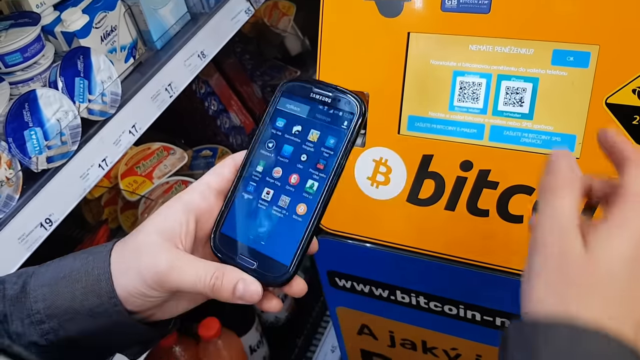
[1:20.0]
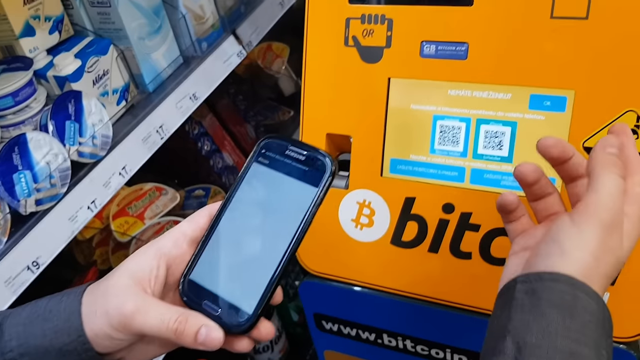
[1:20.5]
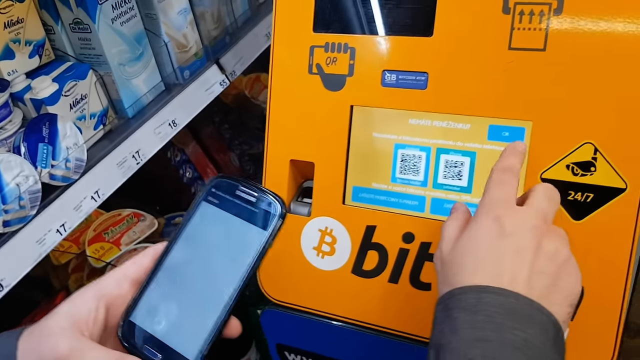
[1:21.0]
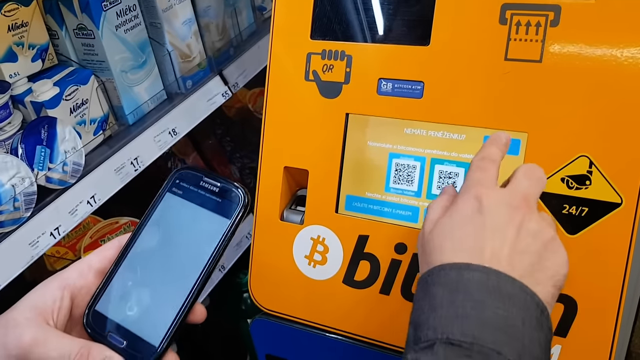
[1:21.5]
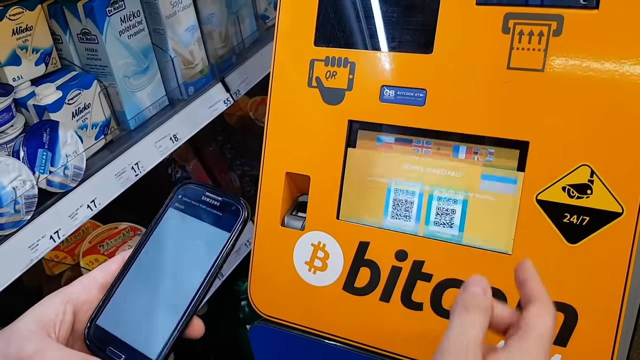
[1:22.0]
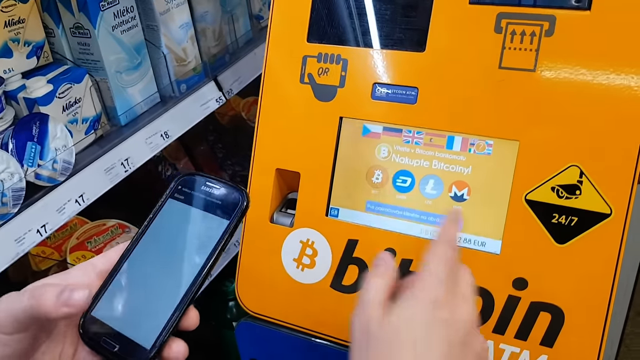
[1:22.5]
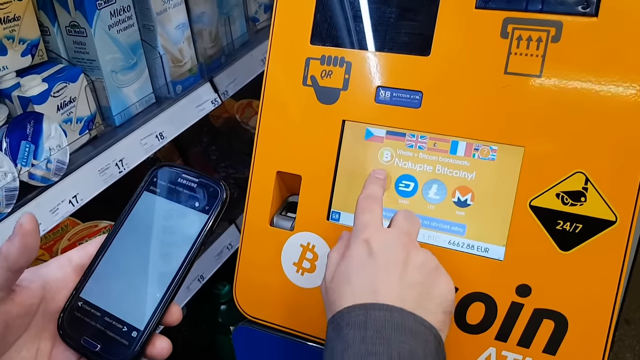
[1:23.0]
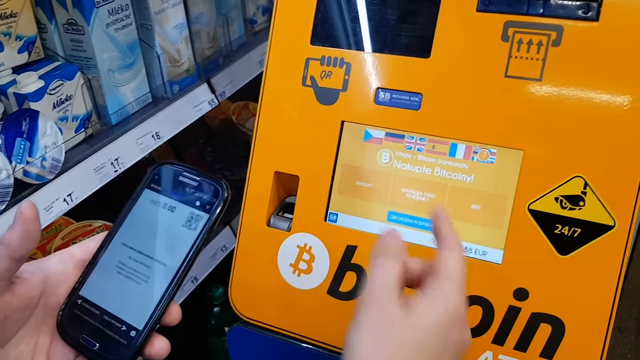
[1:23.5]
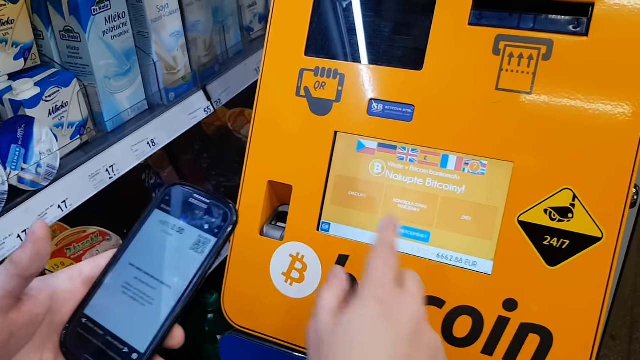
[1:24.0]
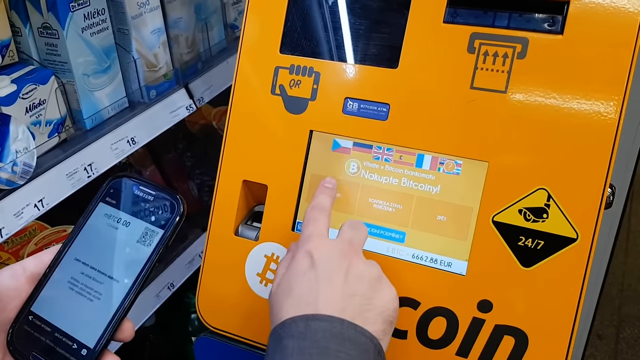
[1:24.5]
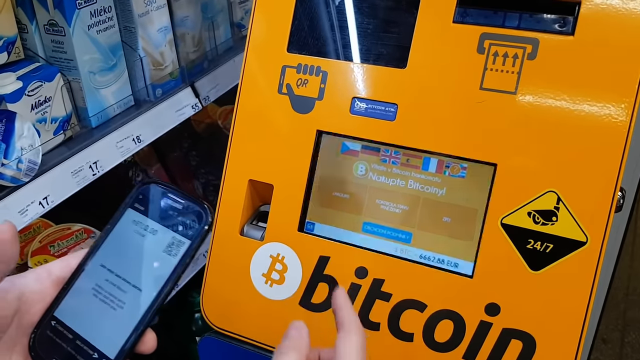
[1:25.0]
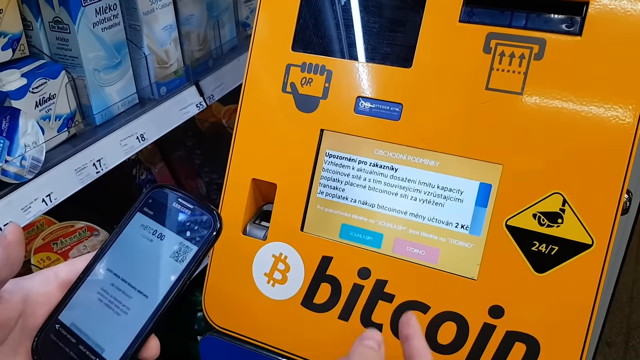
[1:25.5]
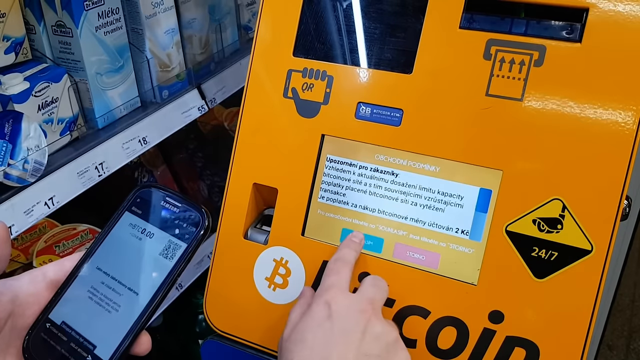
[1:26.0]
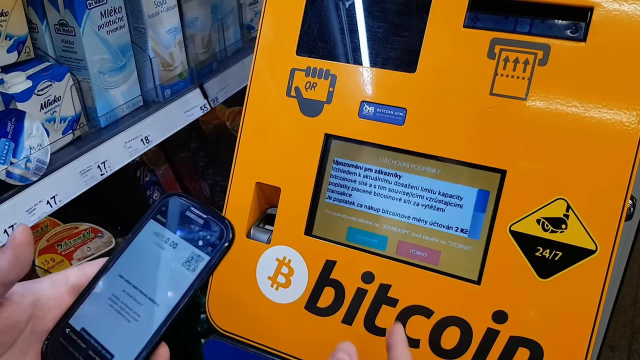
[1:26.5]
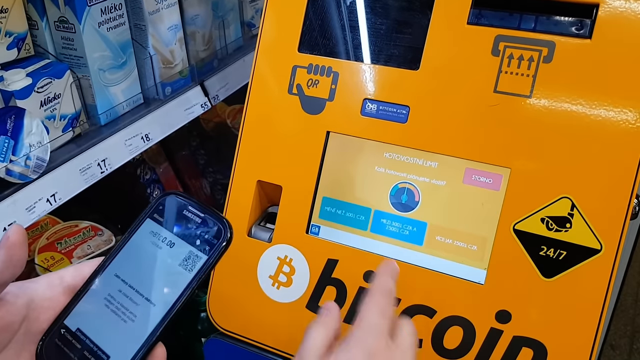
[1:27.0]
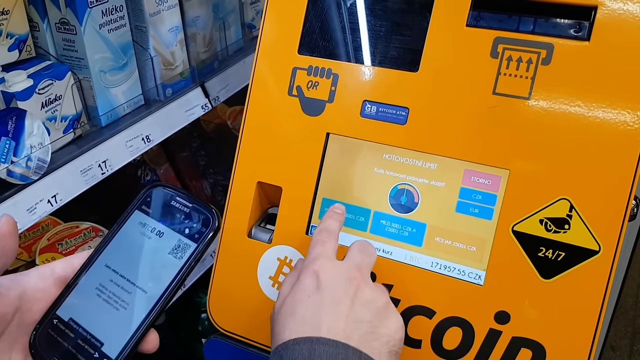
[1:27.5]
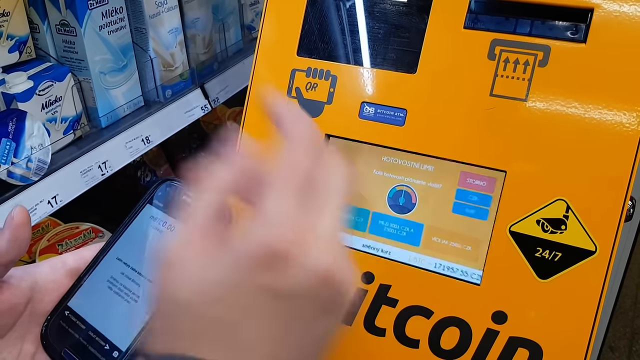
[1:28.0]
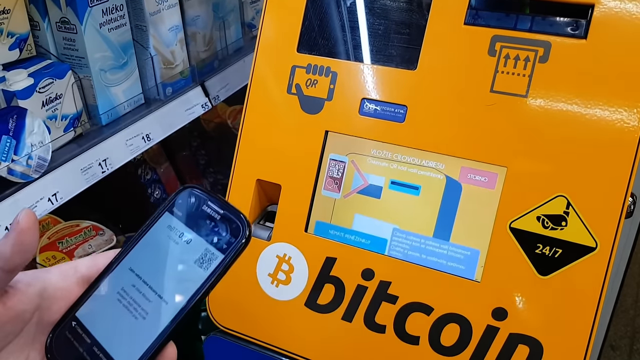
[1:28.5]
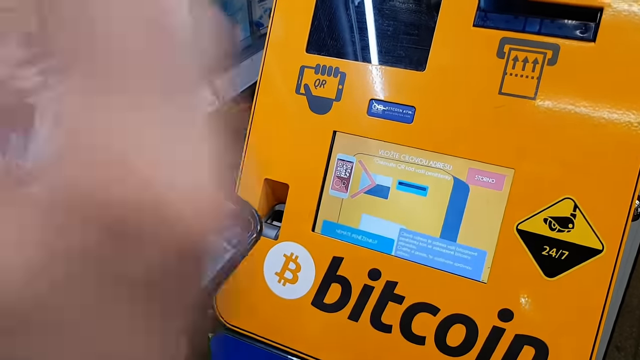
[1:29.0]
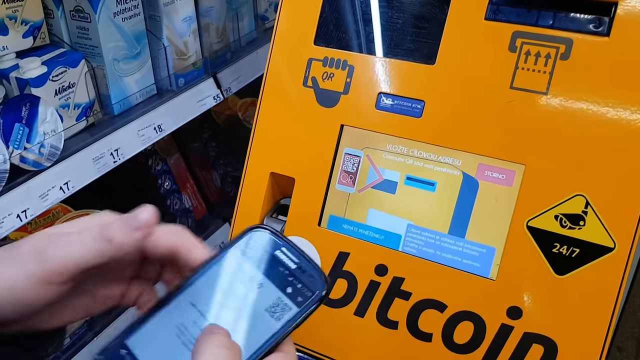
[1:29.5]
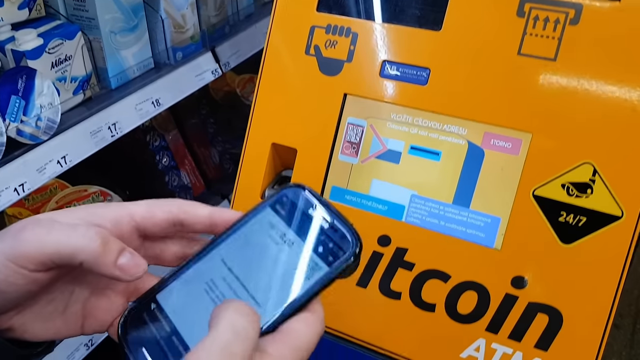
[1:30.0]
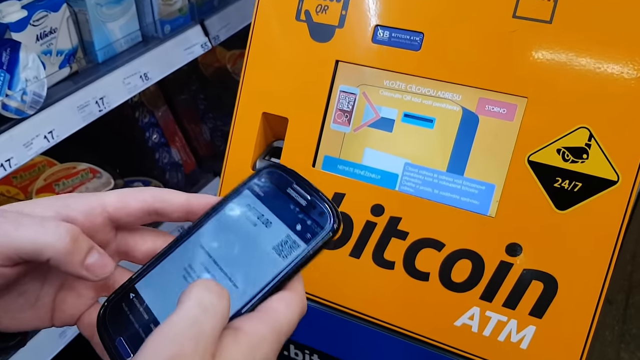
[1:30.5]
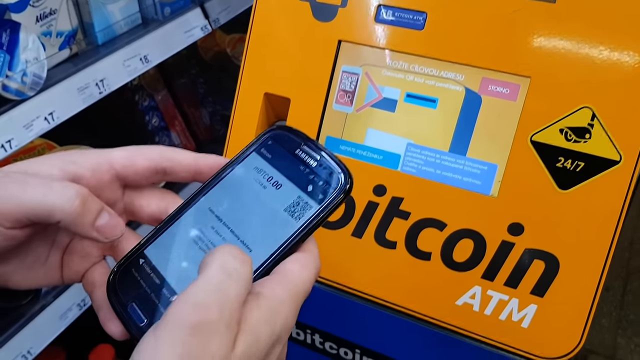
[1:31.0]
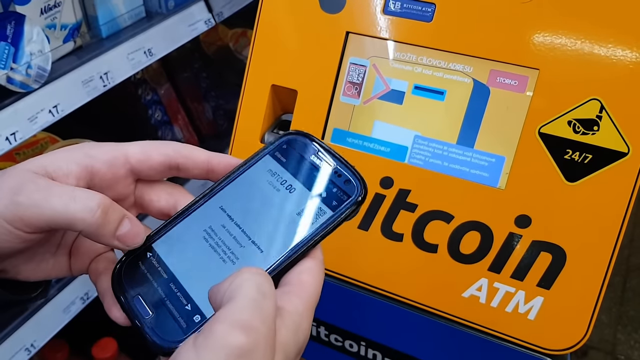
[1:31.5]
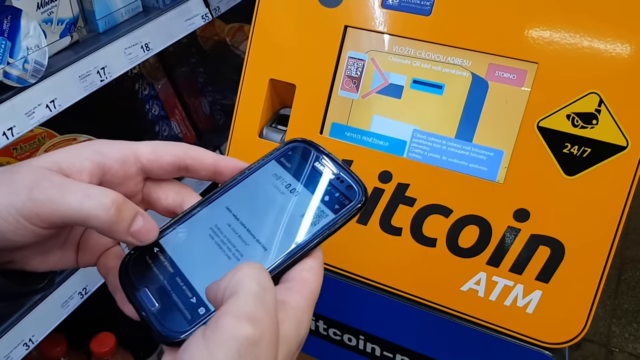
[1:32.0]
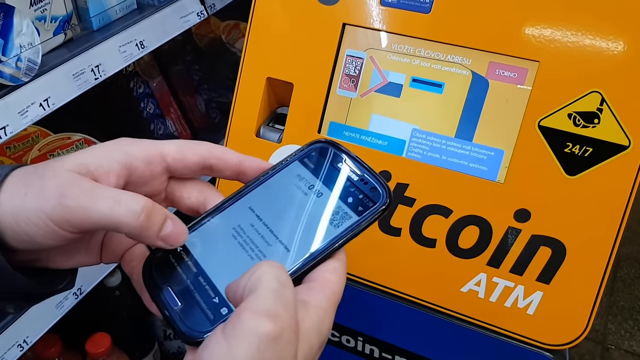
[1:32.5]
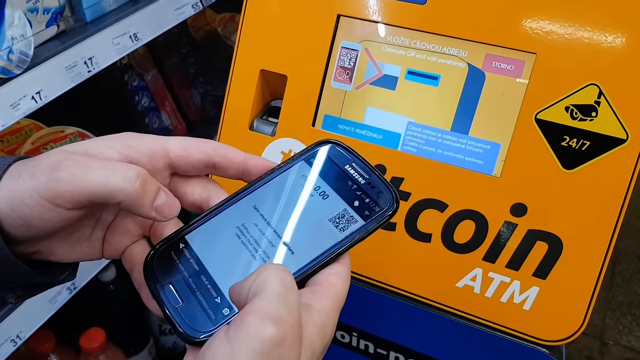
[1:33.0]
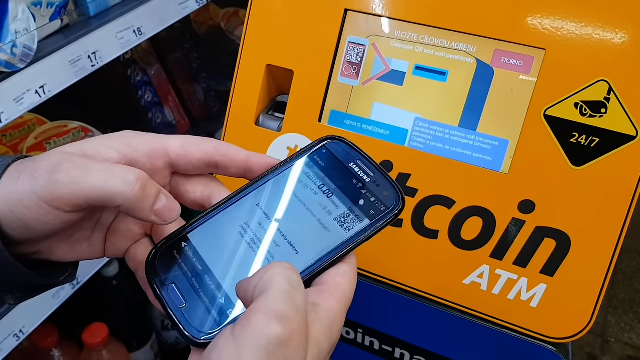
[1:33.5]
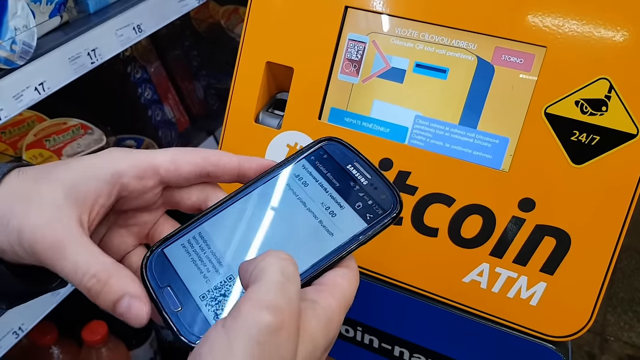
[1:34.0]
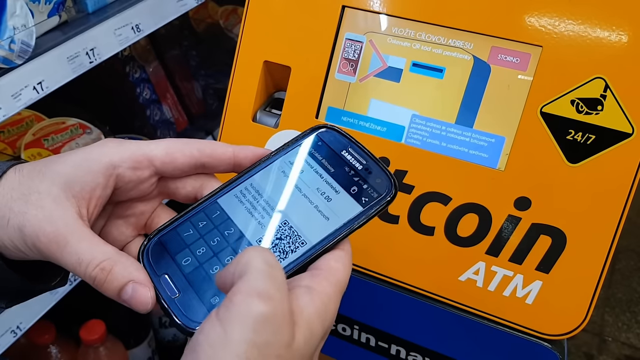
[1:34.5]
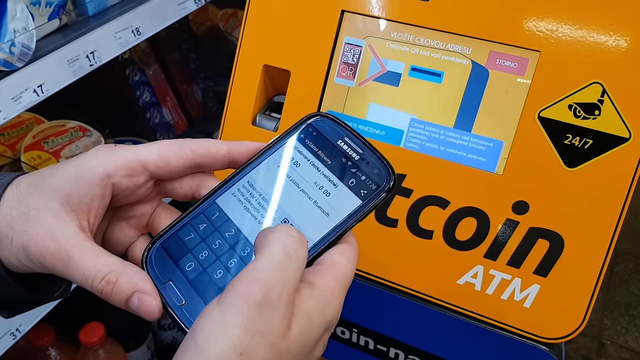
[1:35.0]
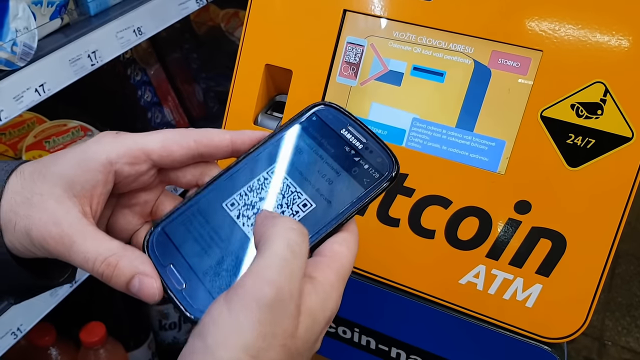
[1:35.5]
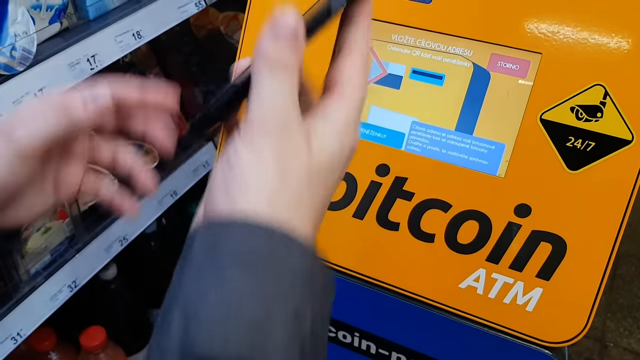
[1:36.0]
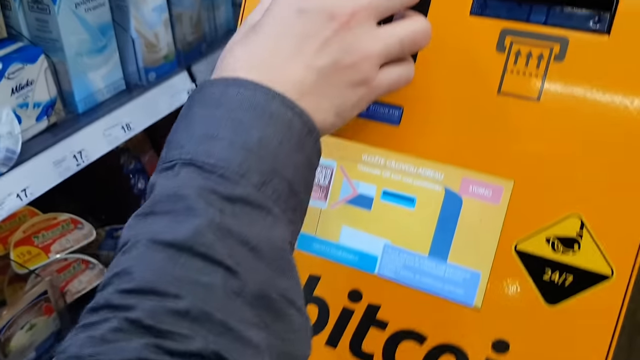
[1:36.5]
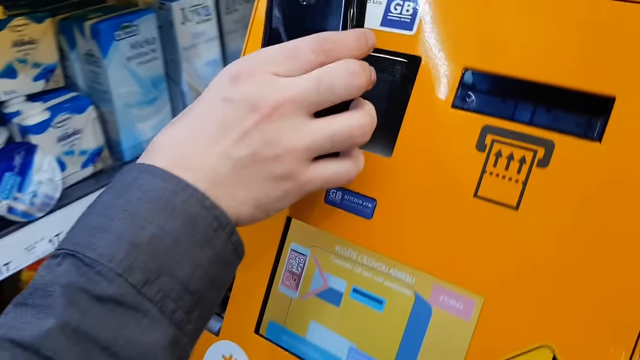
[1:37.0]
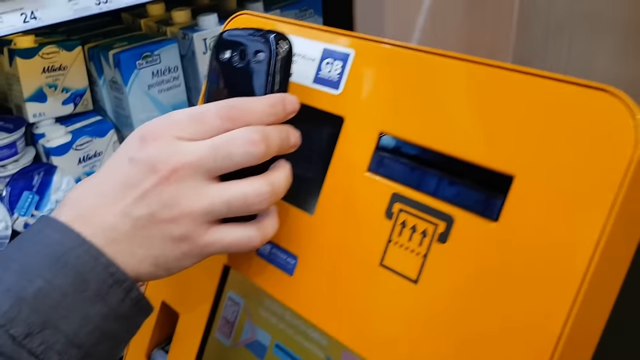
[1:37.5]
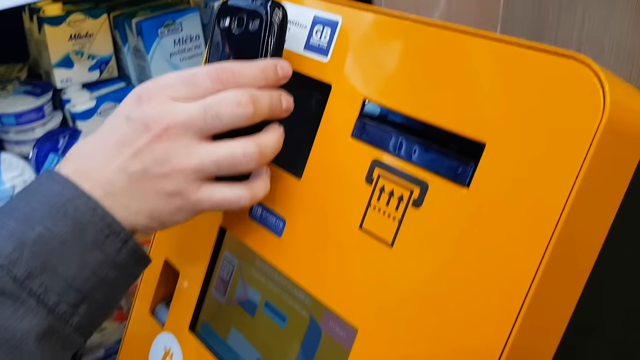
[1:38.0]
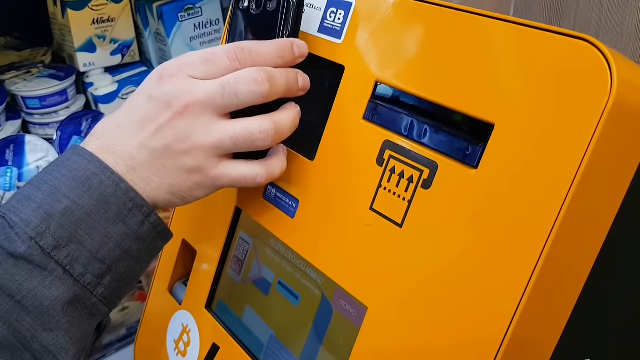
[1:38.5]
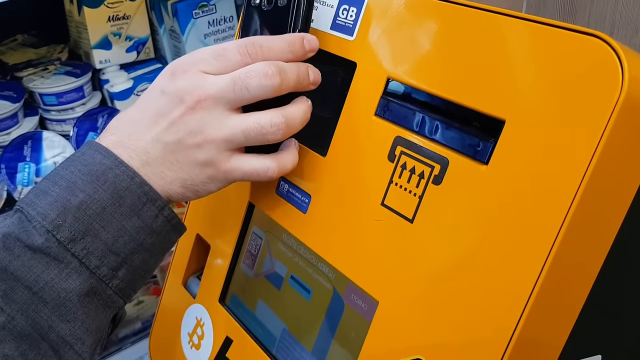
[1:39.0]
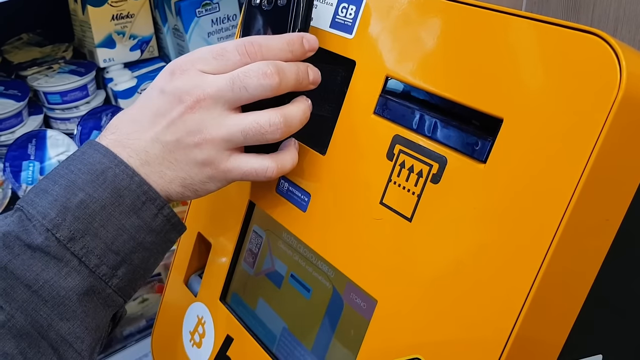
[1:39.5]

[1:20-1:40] On the right-hand side of the screen is the Bitcoin ATM's touchscreen, still showing the QR codes for downloading the app on the phone. The user, standing in front of the ATM, navigates to the newly downloaded app on the phone with both hands. While the app loads, the user uses their right index finger to press the OK button on the ATM's touchscreen, which returns to the original home screen menu. The user again selects the Bitcoin option, the first clickable option on the following menu, which brings up what looks to be the terms and conditions. They select OK and then a second button, bringing up a new screen that appears to be a diagram. Putting both hands back on the phone, the user clicks some buttons in the downloaded app, which brings up a QR code on the phone screen. With their right hand, the user turns the phone around and places the QR code in the line of sight of what appears to be a scanner on the ATM.